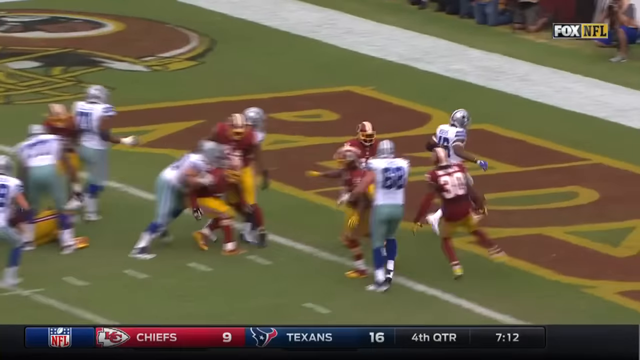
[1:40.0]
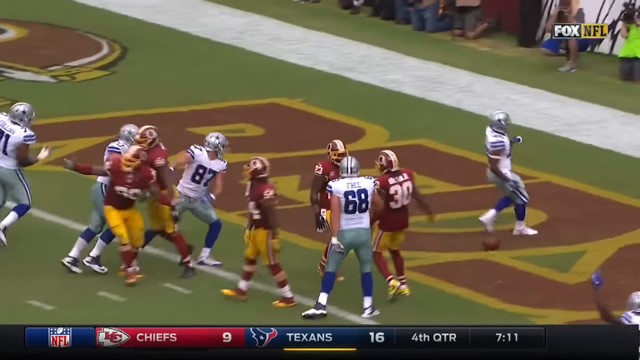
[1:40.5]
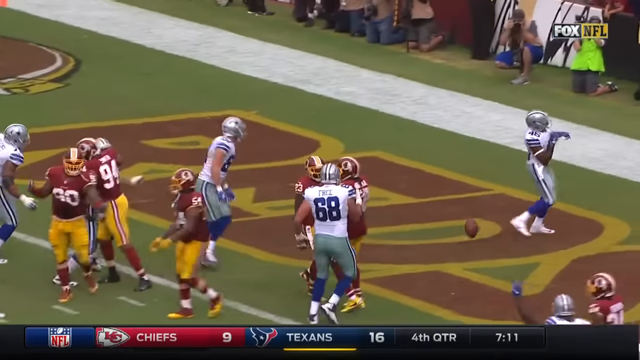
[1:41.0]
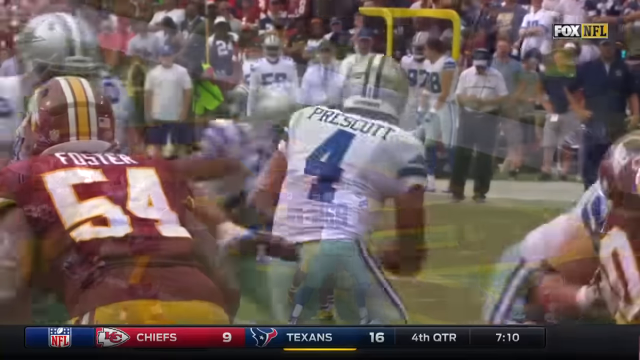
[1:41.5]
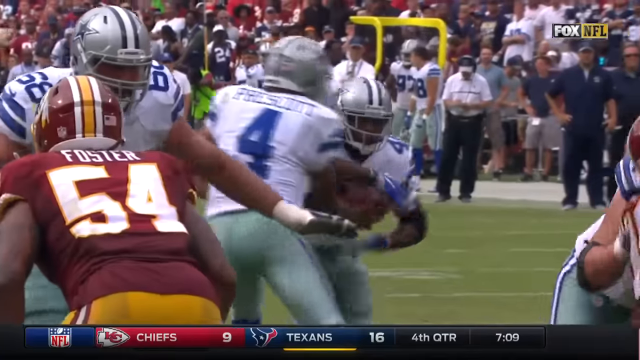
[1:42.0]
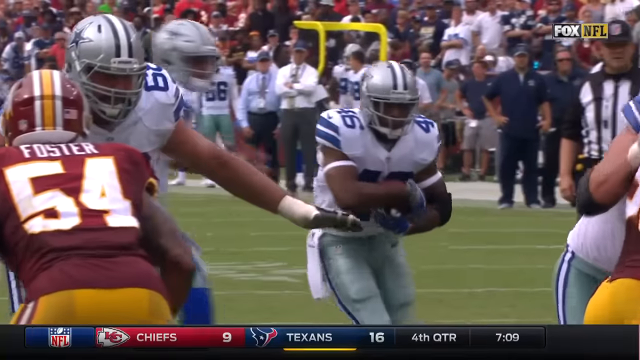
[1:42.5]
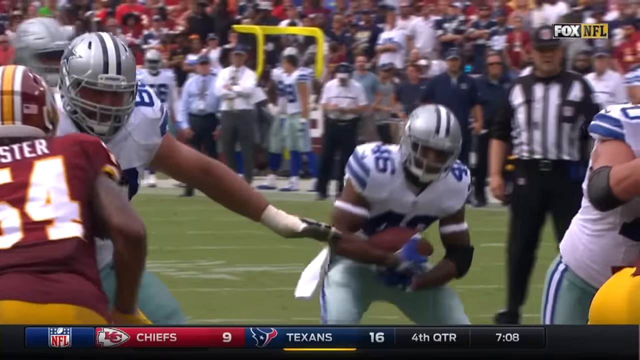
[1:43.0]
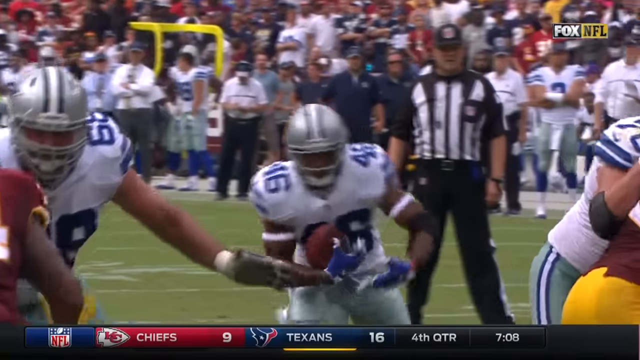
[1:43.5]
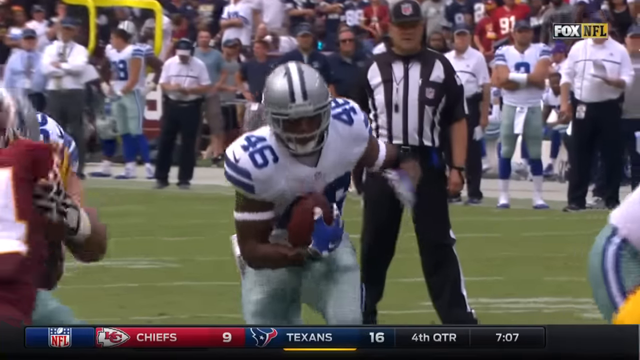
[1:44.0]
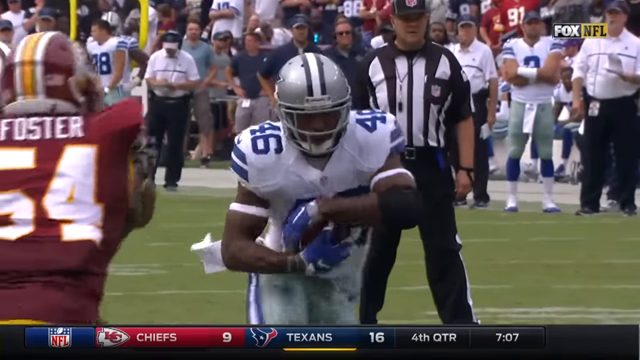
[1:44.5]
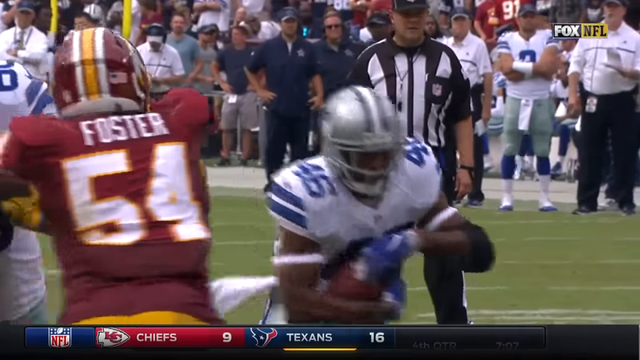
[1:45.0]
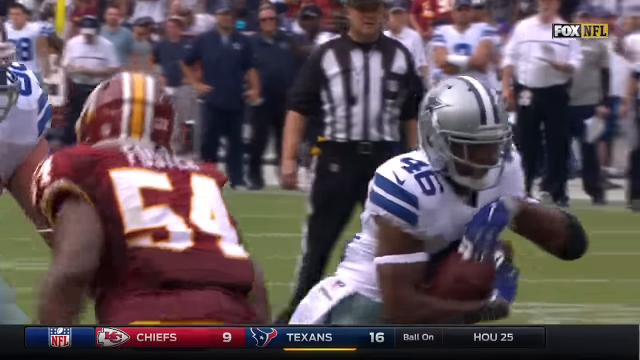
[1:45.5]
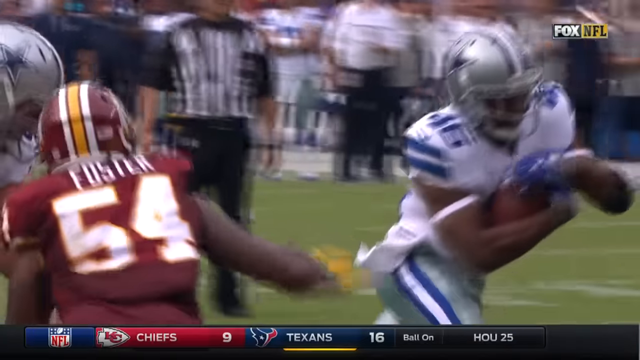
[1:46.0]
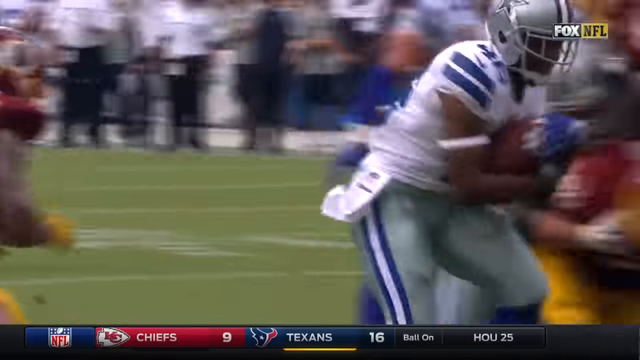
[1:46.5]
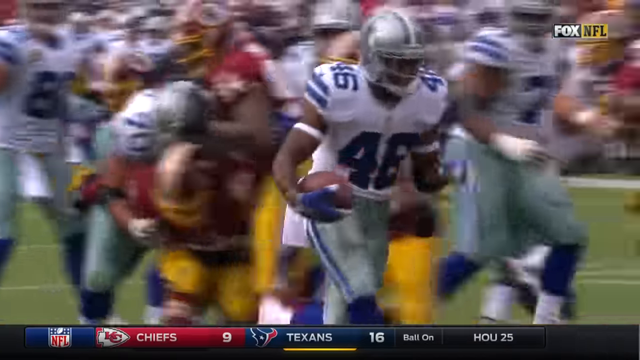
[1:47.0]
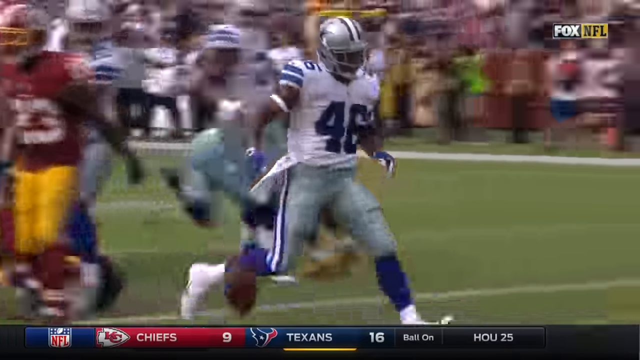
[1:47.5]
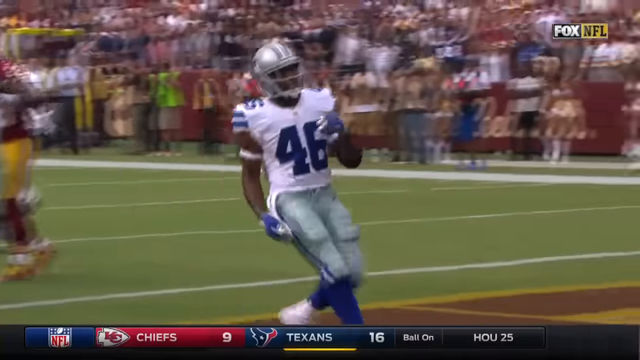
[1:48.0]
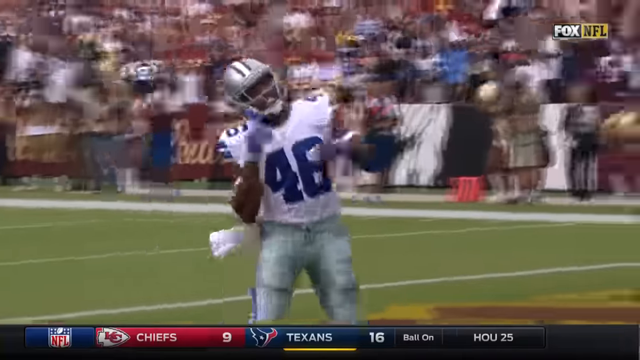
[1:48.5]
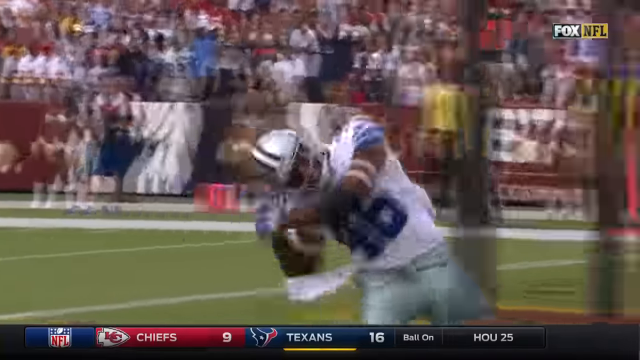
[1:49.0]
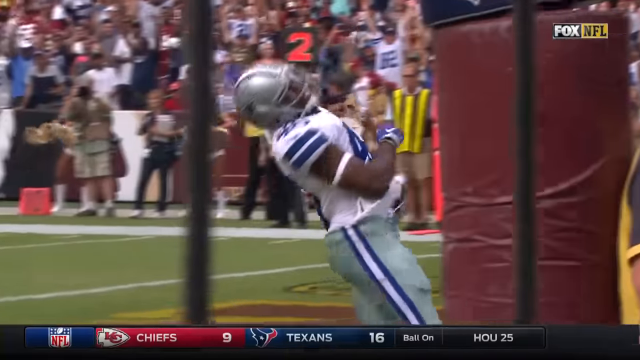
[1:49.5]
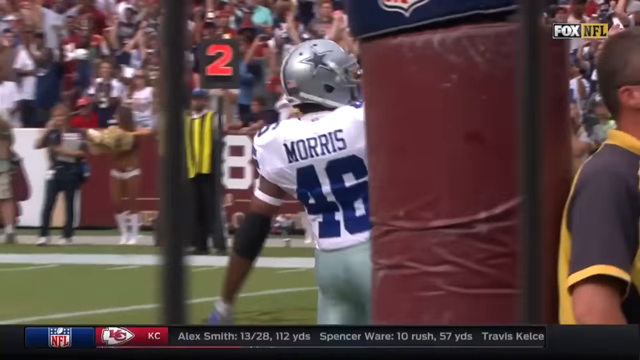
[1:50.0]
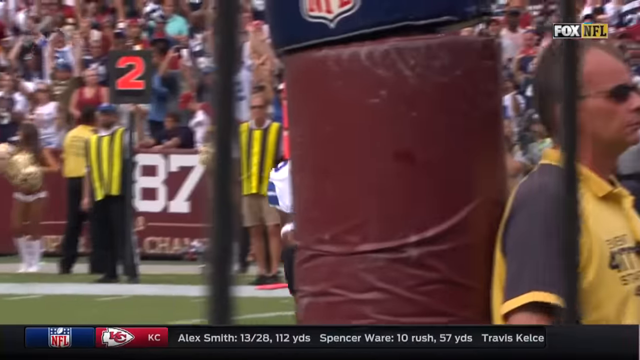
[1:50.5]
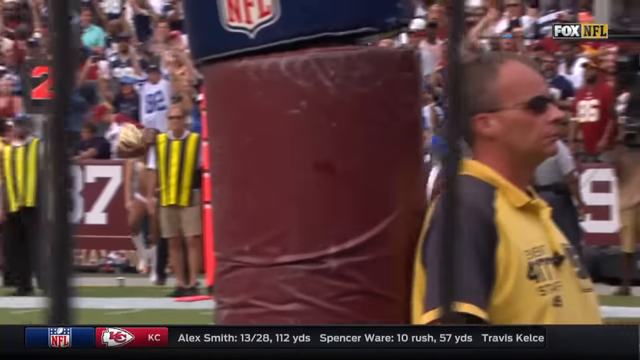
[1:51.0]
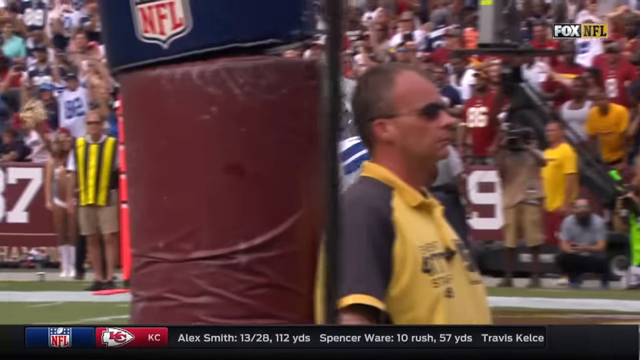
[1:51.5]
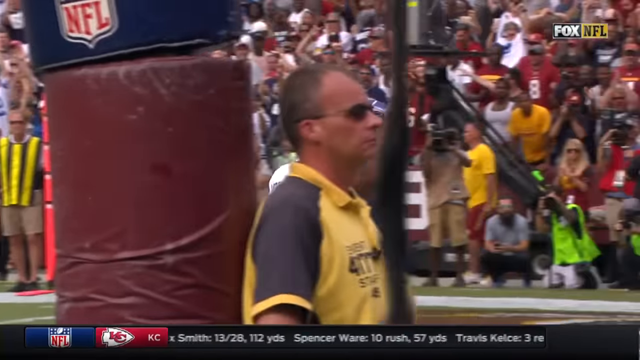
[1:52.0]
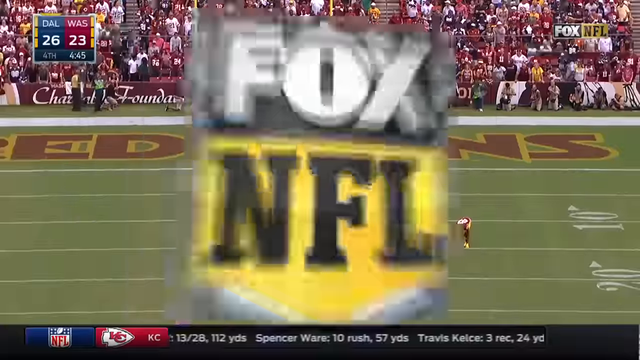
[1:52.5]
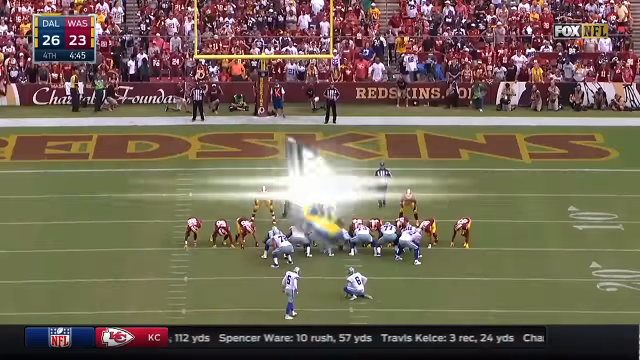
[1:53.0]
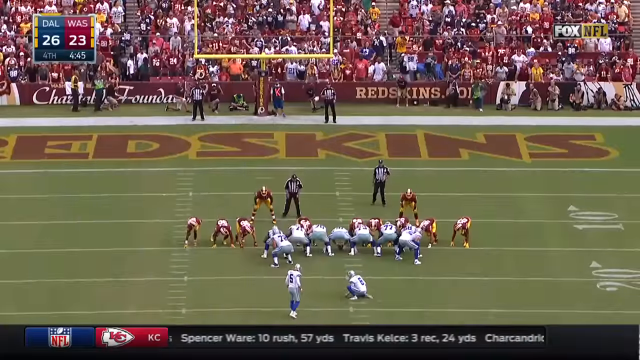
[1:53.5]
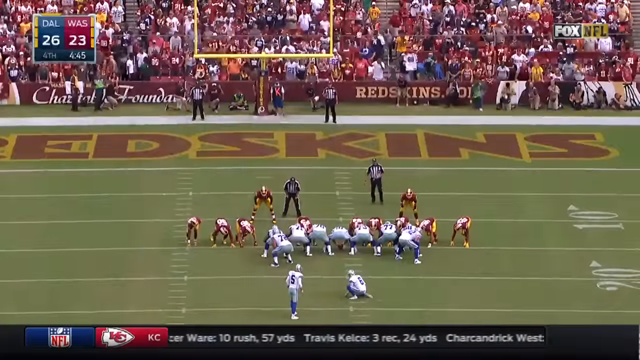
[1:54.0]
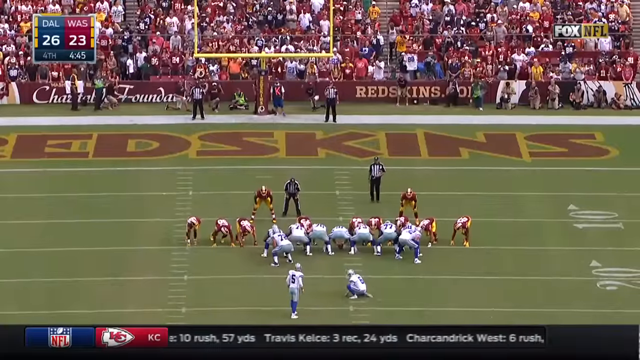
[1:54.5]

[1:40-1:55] An aerial view looks down at the end zone as number 46 completes the touchdown. He pulls his hands back to his right side as if holding a bat, then swings up toward his upper left, toward the spectators, as if he has just hit a home run. A slow-motion frontal view of the play follows, recorded from the end zone. Number 46 comes through the defensive line along a straight, open path, runs through, and does the bat-swing gesture again. Then an NFL emblem flashes on the screen.